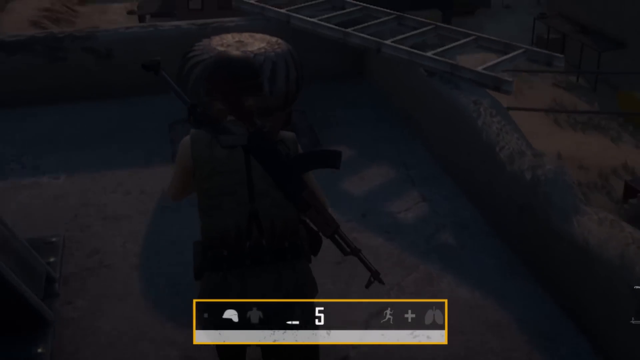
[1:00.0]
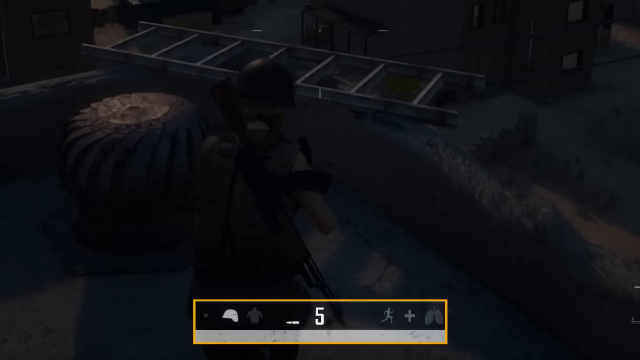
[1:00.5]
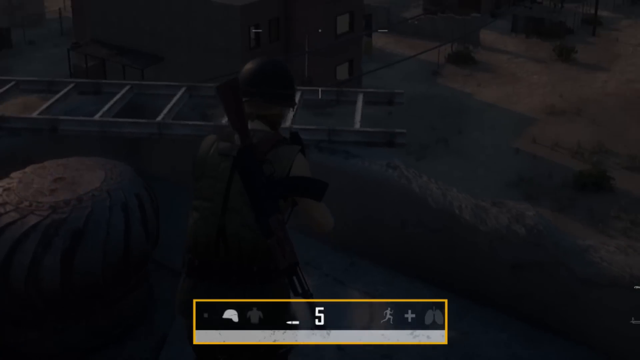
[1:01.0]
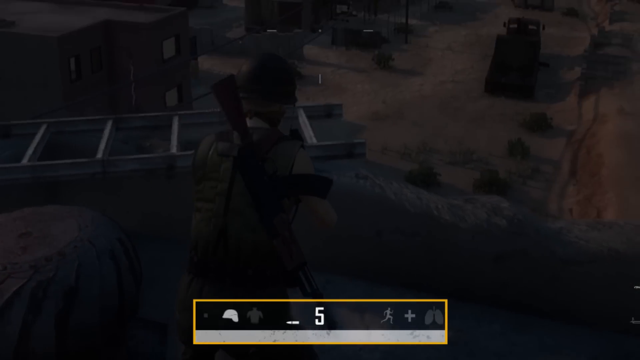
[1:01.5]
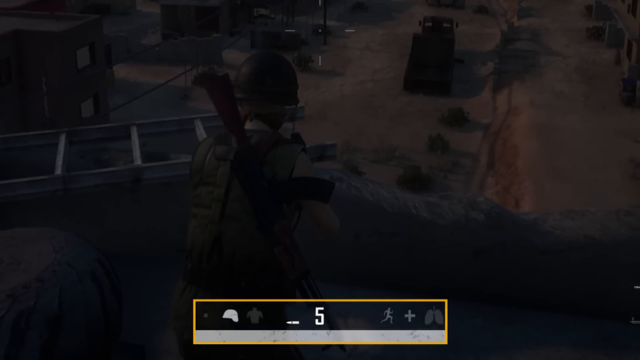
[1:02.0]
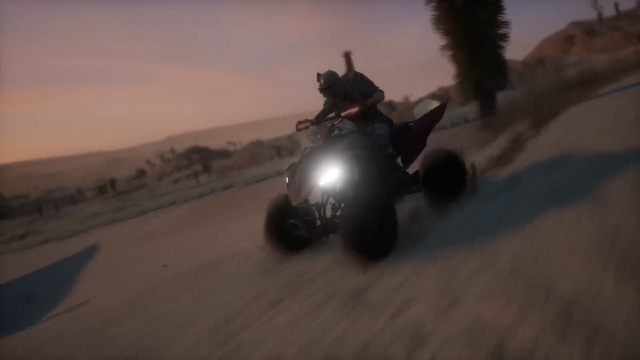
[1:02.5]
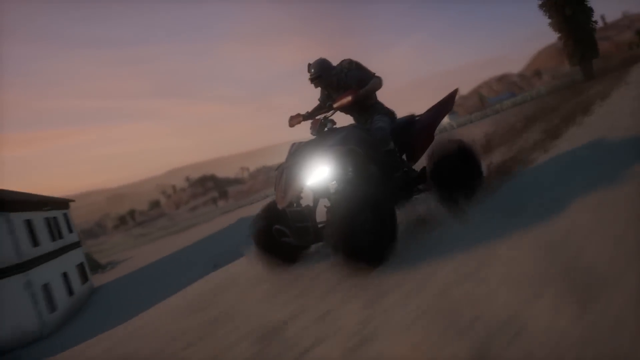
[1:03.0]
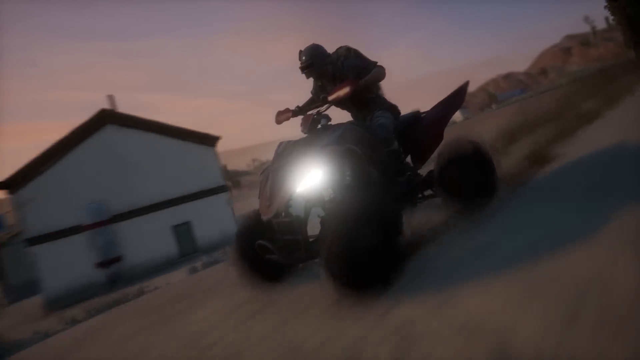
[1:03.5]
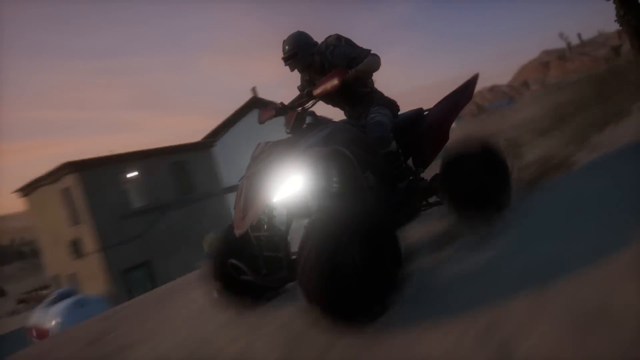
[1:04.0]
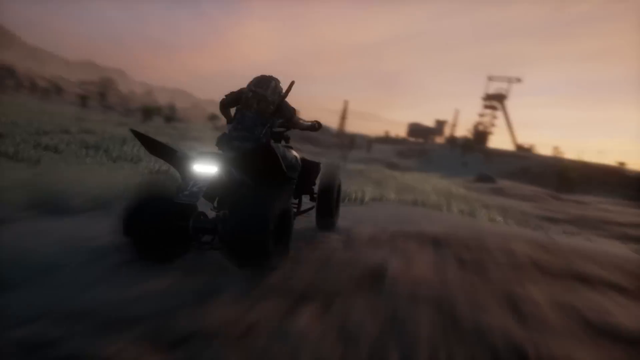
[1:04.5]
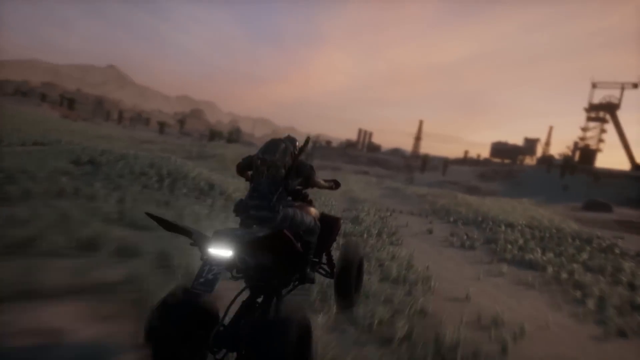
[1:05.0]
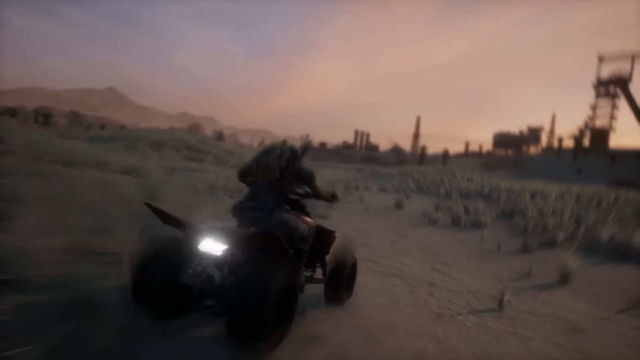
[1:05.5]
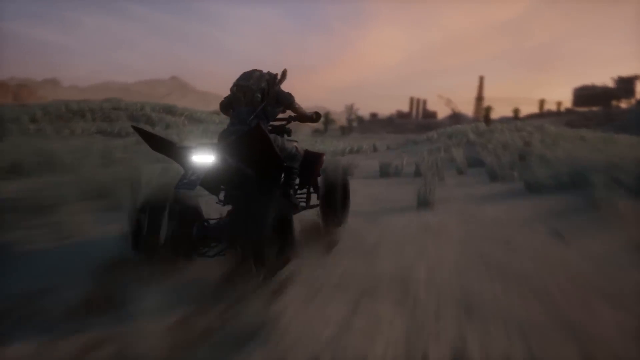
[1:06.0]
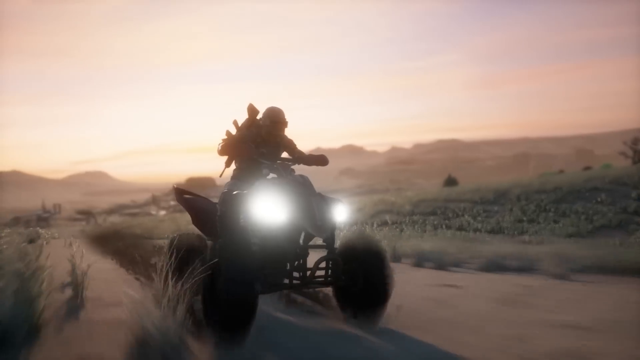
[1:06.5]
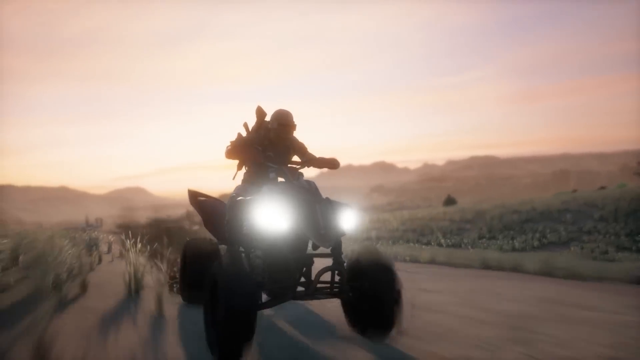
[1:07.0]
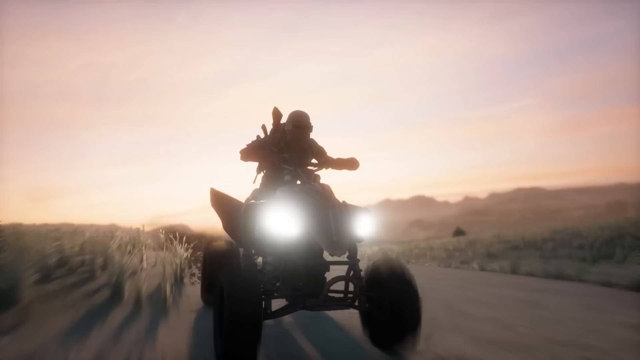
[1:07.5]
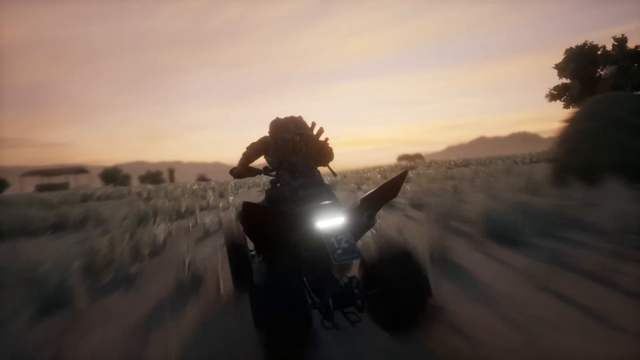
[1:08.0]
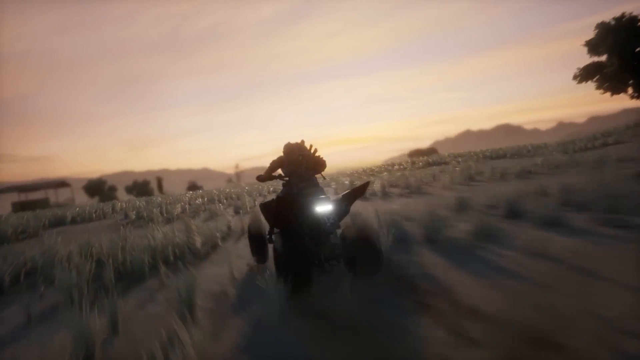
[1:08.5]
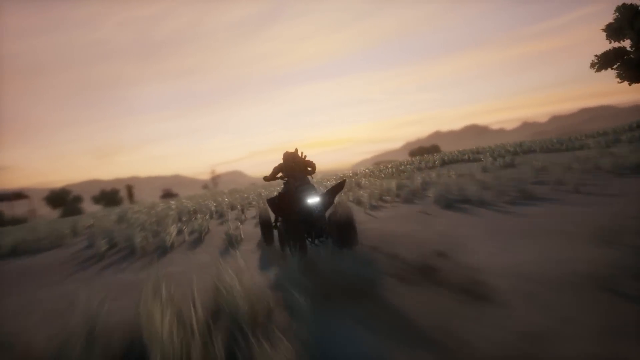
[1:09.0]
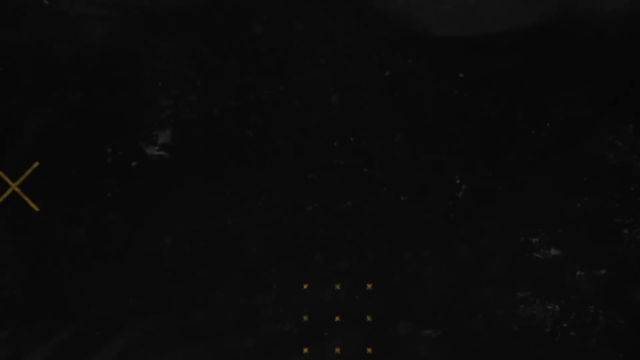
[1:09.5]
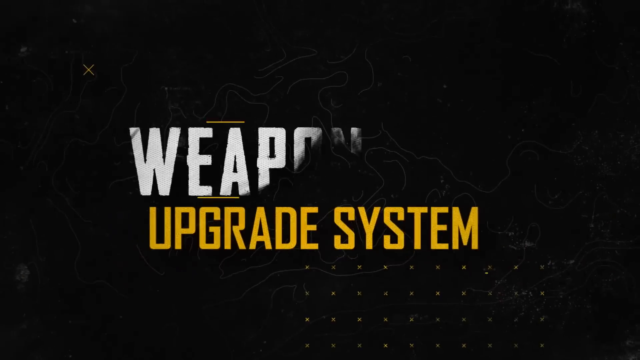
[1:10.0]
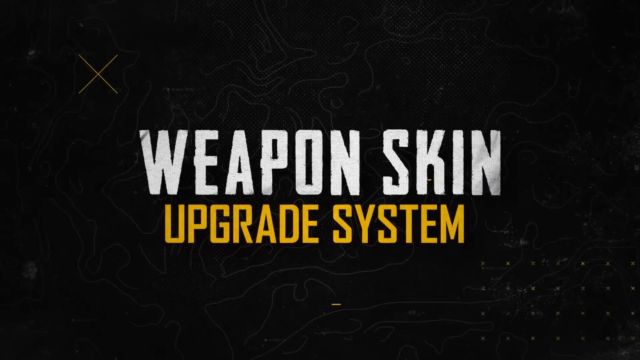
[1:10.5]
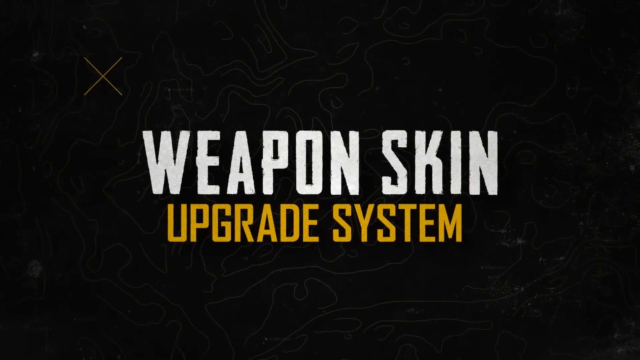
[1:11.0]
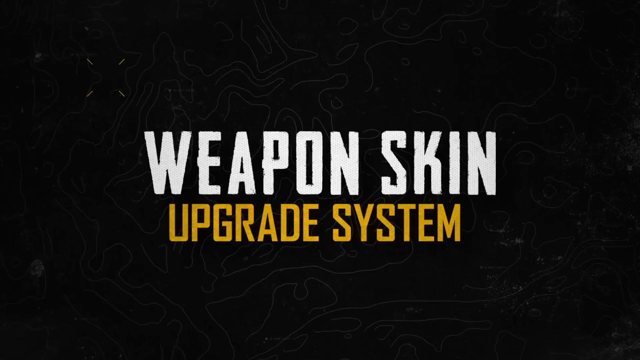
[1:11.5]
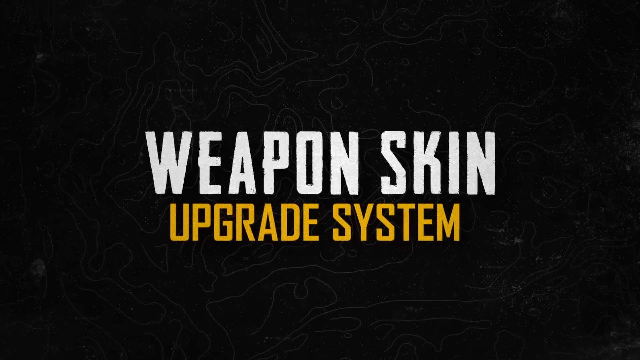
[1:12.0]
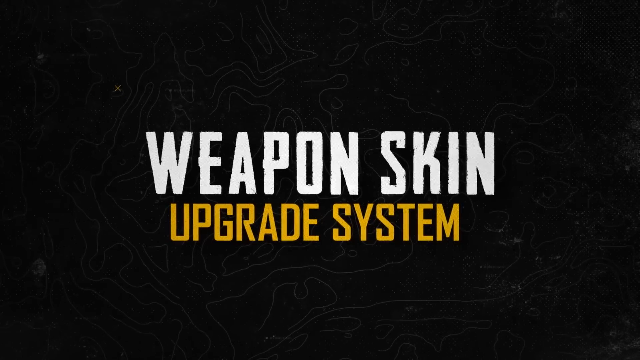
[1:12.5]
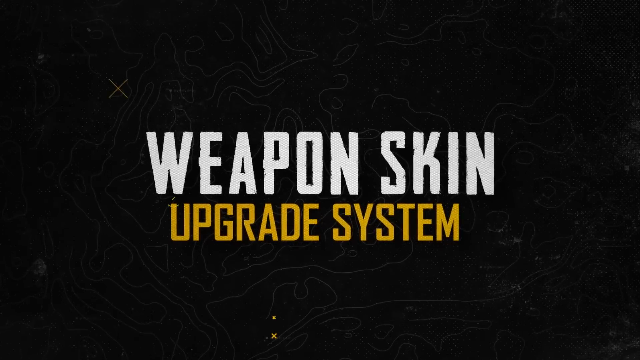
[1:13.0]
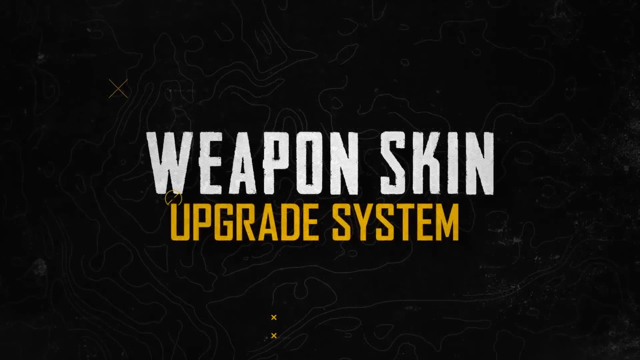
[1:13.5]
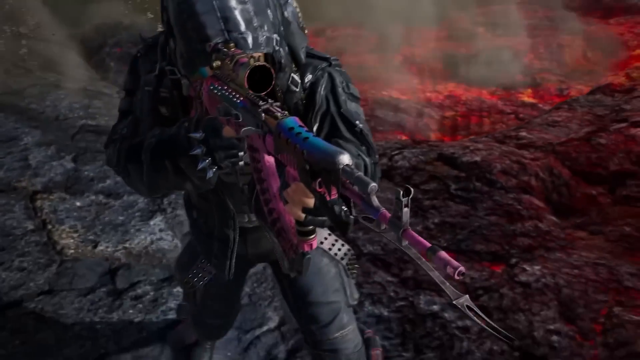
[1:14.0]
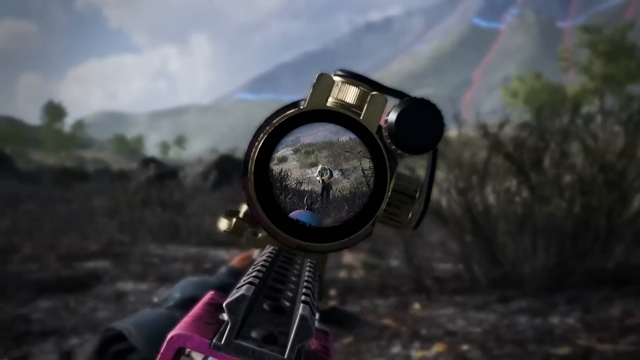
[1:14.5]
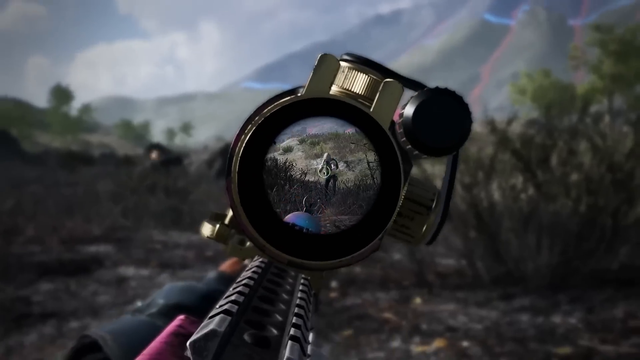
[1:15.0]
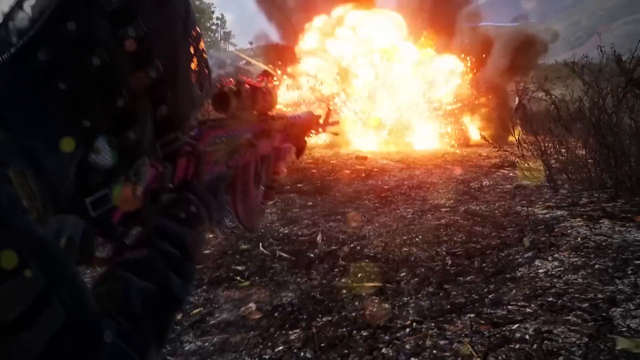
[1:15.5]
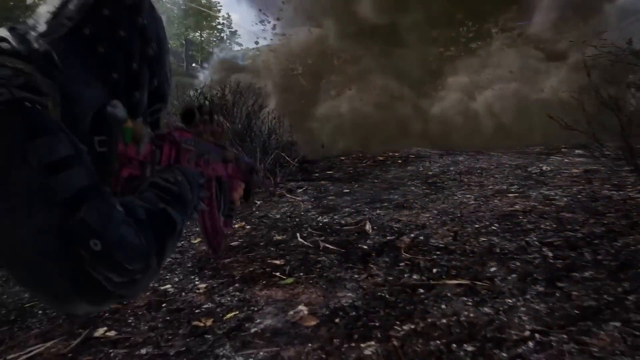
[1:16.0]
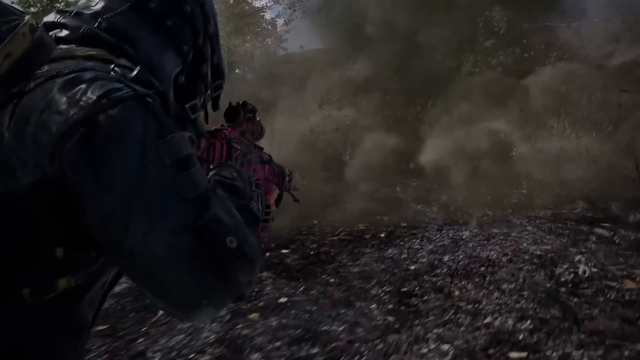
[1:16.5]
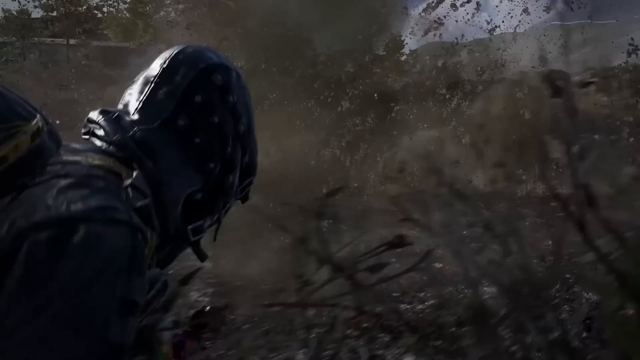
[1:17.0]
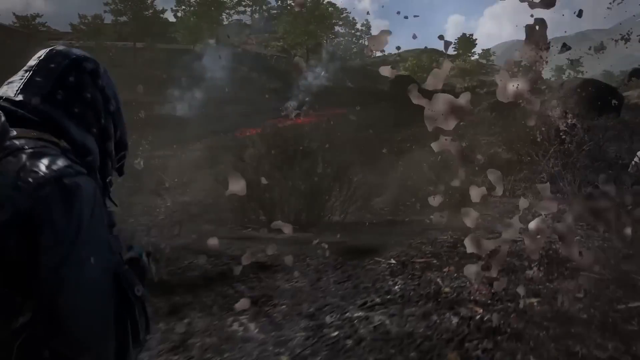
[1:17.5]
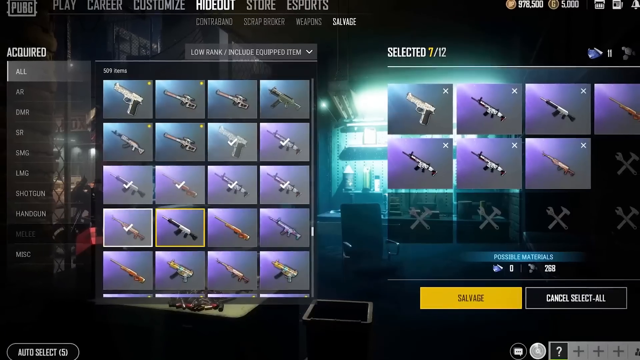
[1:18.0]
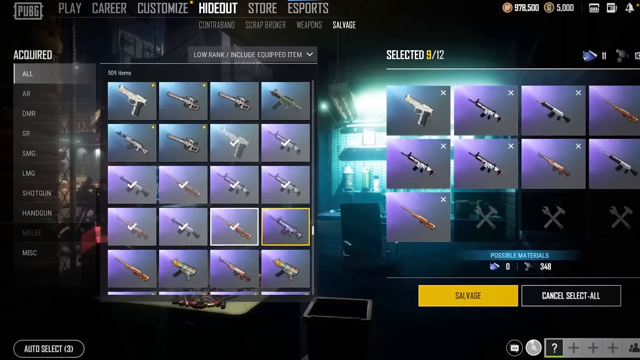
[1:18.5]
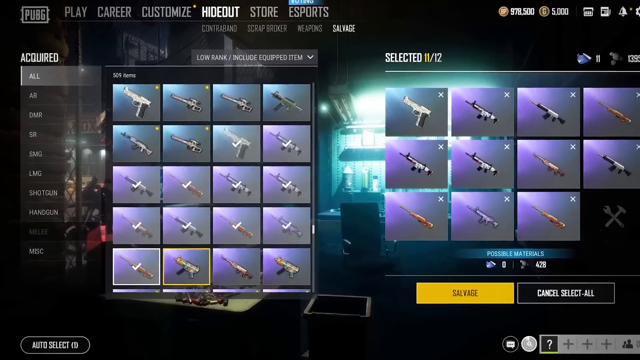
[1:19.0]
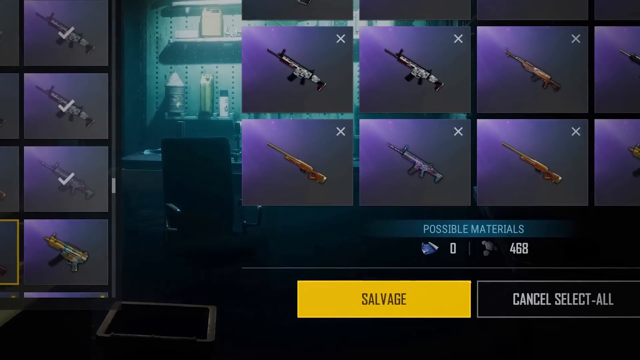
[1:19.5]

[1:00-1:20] A man looks over the edge of a building; it is very dark and not much can be made out. A different man then rides a quad bike through a desert-like area, heading towards some sort of industrial factory area in the distance. The camera switches between angles, first looking at the front of the quad bike, then at its back left as it drives through the desert. A black screen appears with "weapon skin" in white lettering and, underneath in a golden yellow colour, "upgrade system". From a top-down view, somebody shoots a gun with a pinkish-blue skin on it, with what appears to be some sort of lava around him in the background. This looks like a different area from the desert one, less dead, with more trees and greenery. Somebody has apparently set off some kind of bomb, as there is a lot of smoke in front of this player. The camera then looks over the person's right shoulder, following him past the smoke and debris. Next, an inventory of some kind is shown, with lots of different weapons. It is very colourful, with a shade of purple, and the person seems to be scrolling through the different weapons.